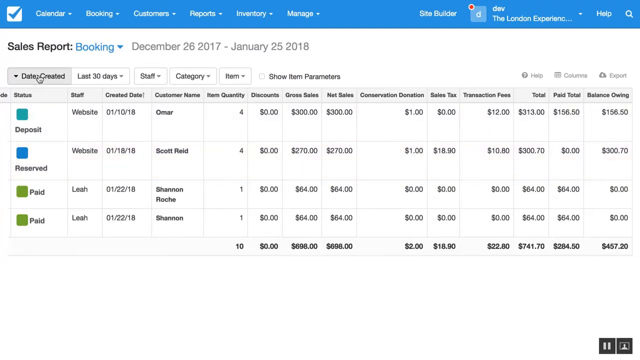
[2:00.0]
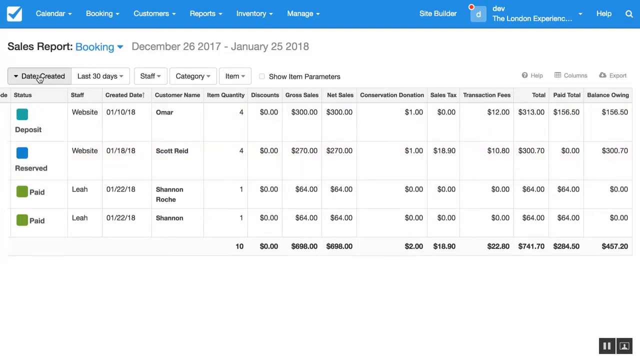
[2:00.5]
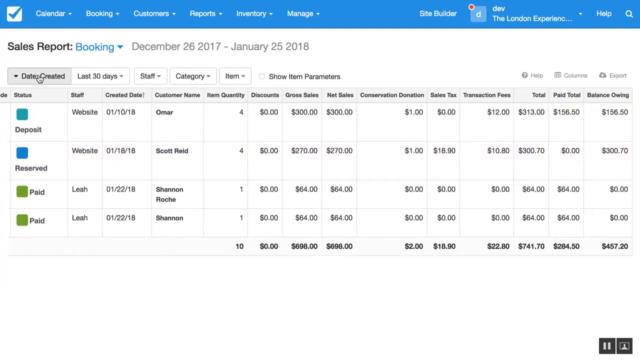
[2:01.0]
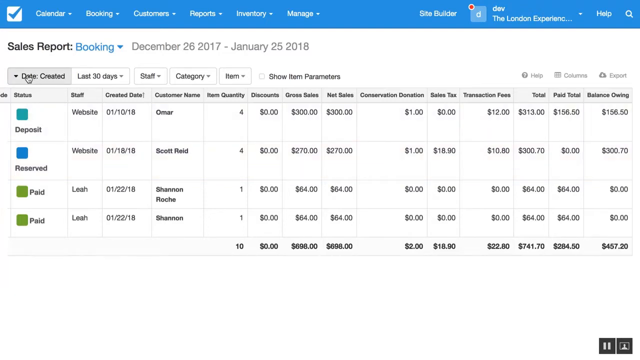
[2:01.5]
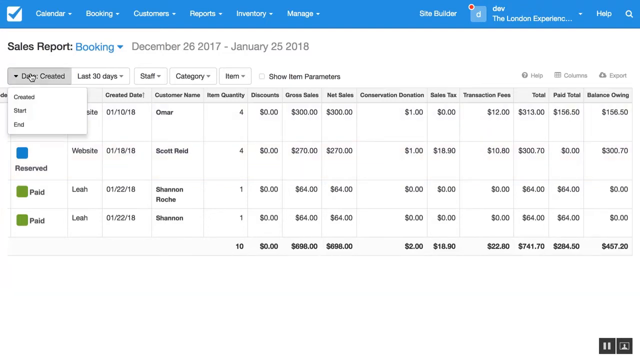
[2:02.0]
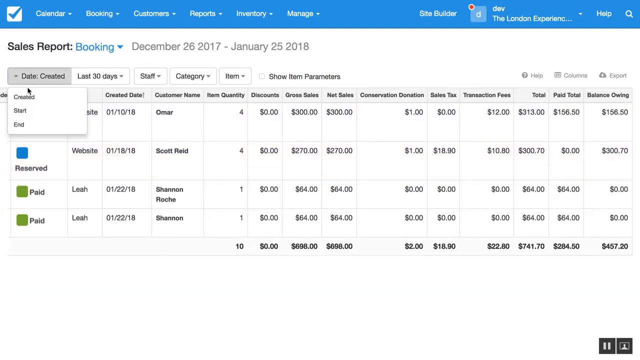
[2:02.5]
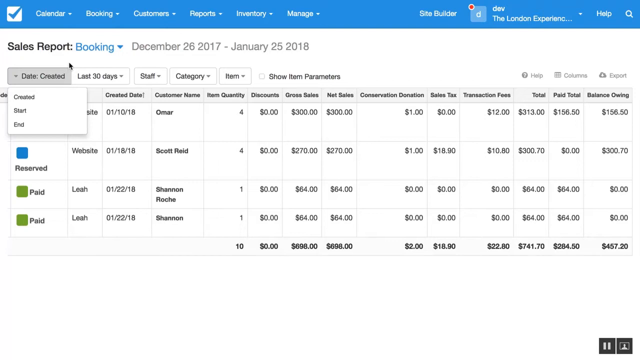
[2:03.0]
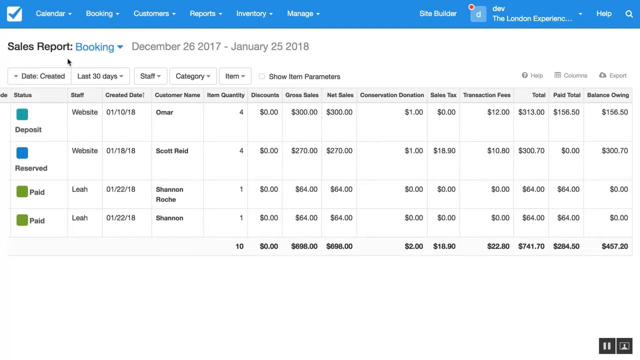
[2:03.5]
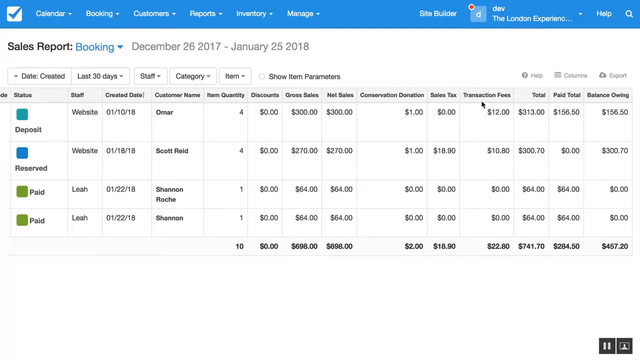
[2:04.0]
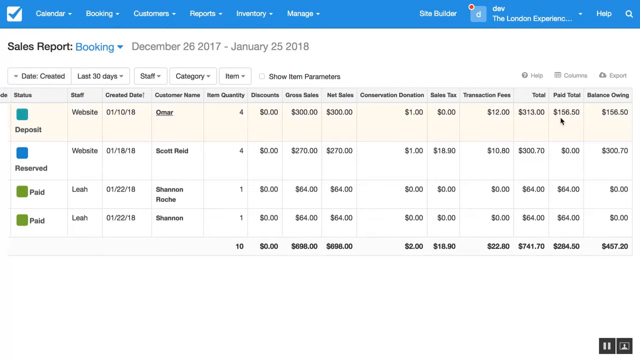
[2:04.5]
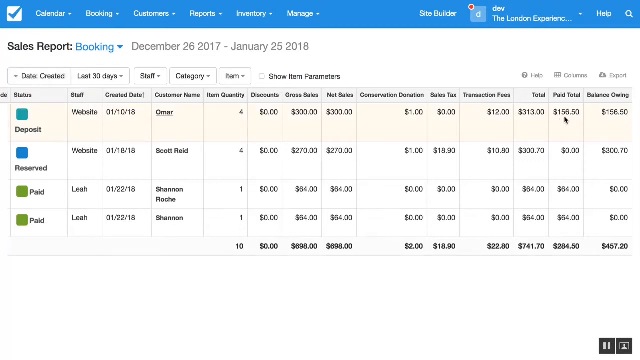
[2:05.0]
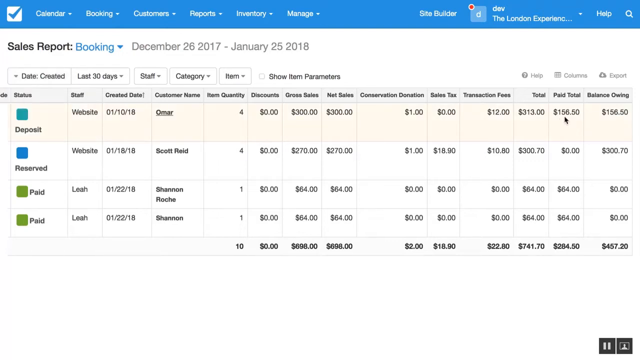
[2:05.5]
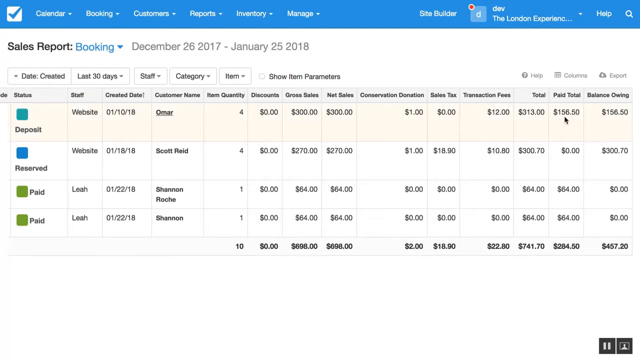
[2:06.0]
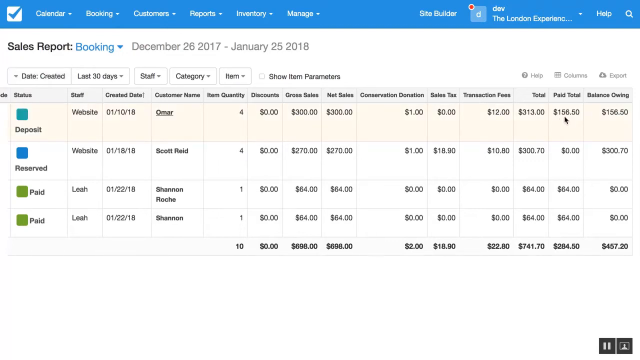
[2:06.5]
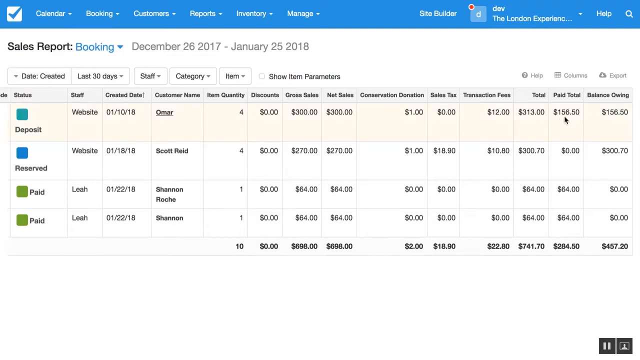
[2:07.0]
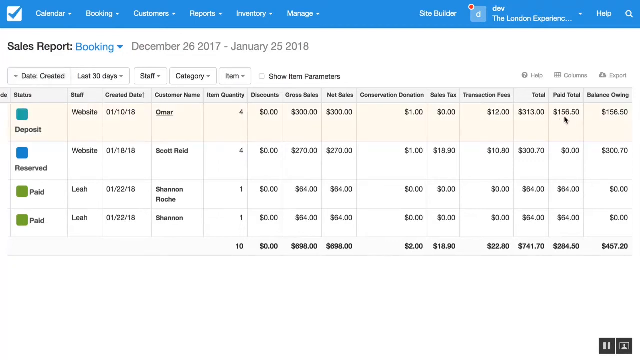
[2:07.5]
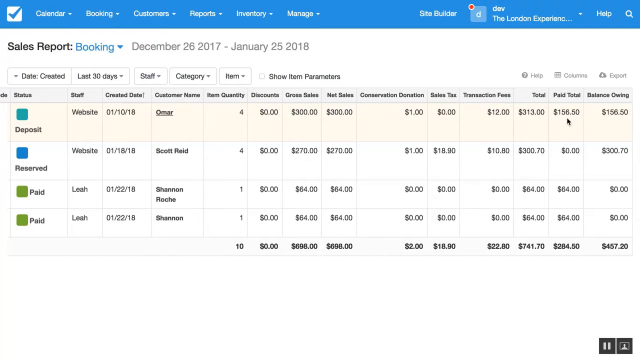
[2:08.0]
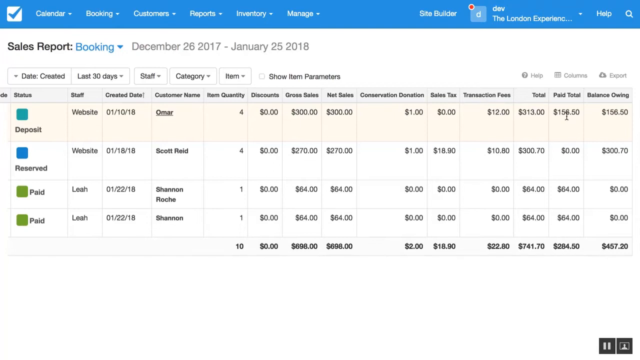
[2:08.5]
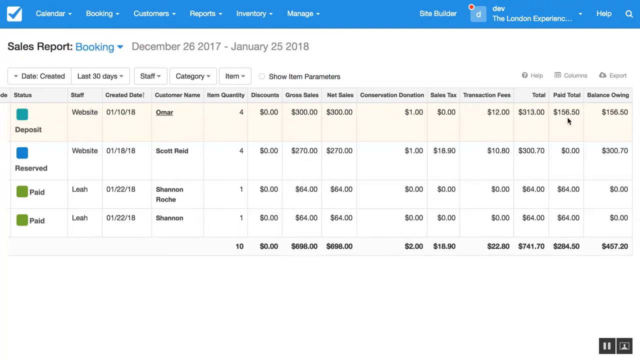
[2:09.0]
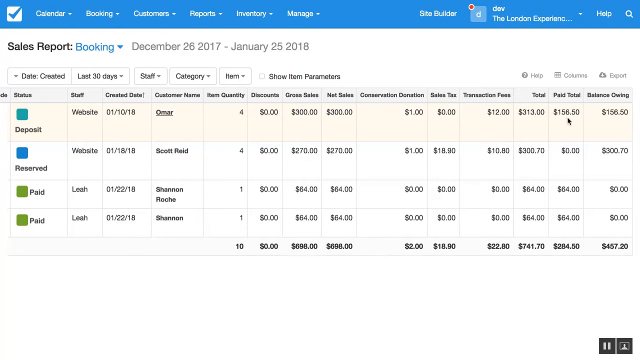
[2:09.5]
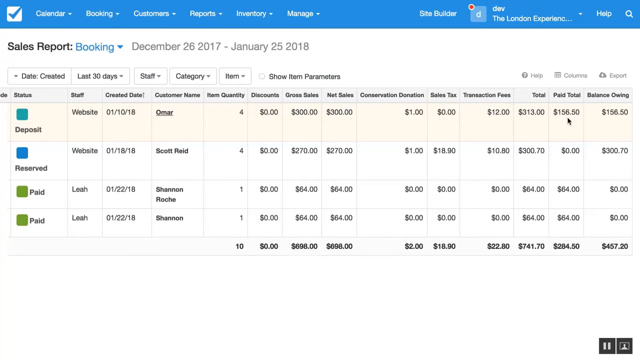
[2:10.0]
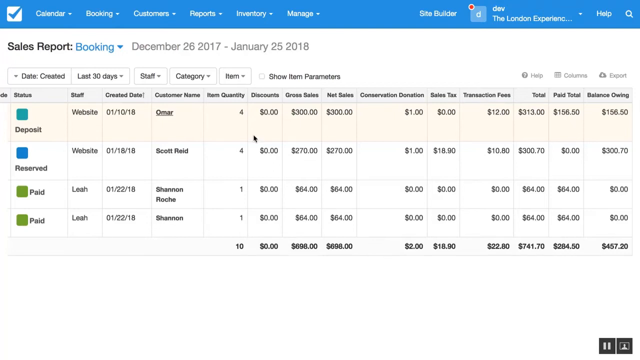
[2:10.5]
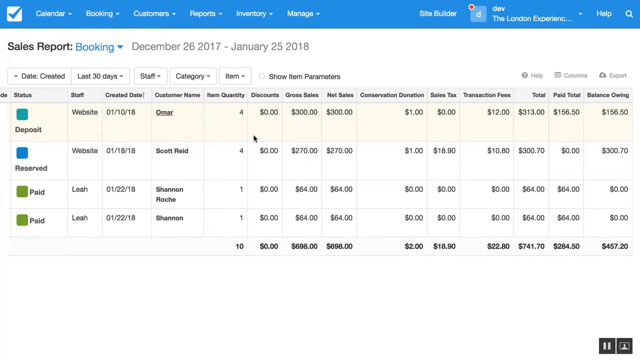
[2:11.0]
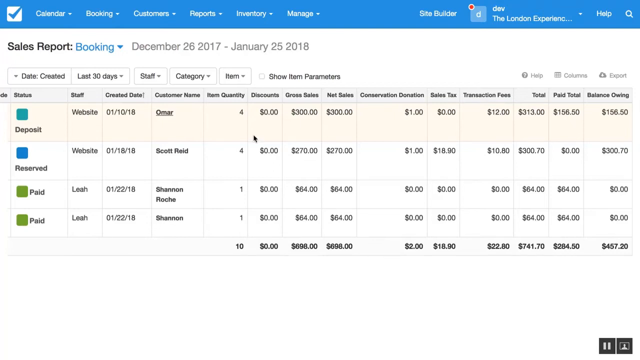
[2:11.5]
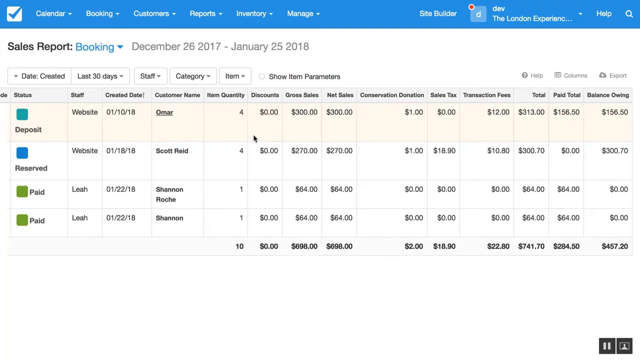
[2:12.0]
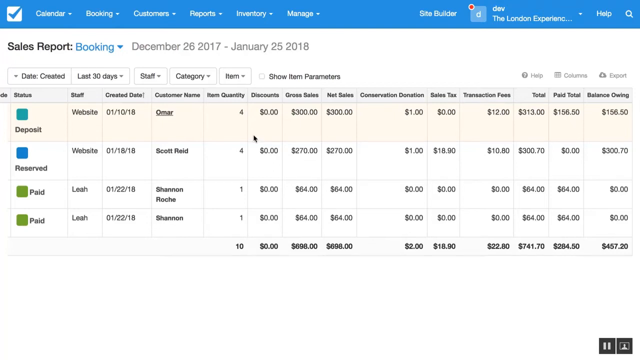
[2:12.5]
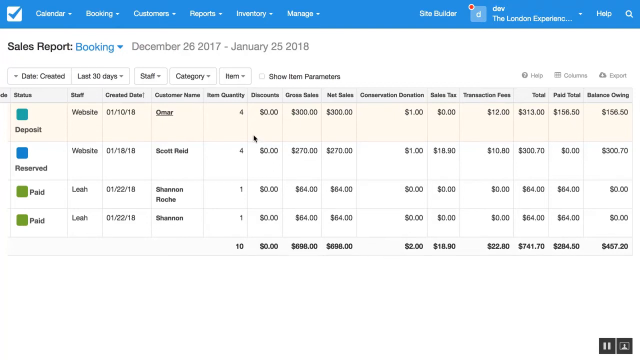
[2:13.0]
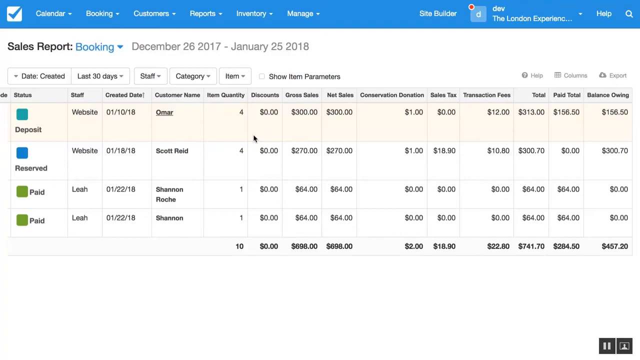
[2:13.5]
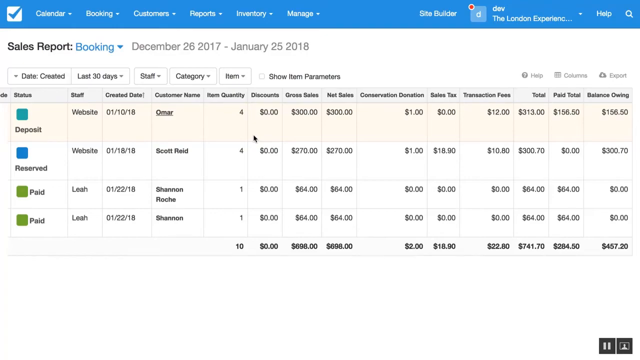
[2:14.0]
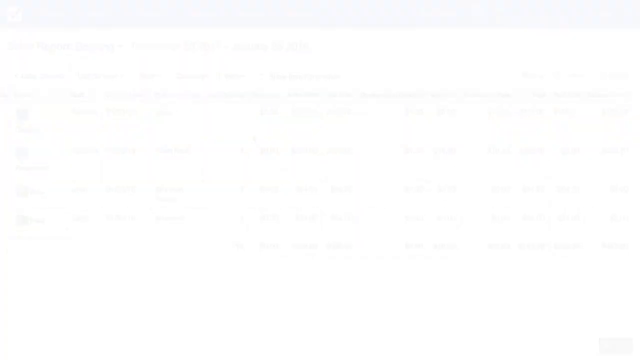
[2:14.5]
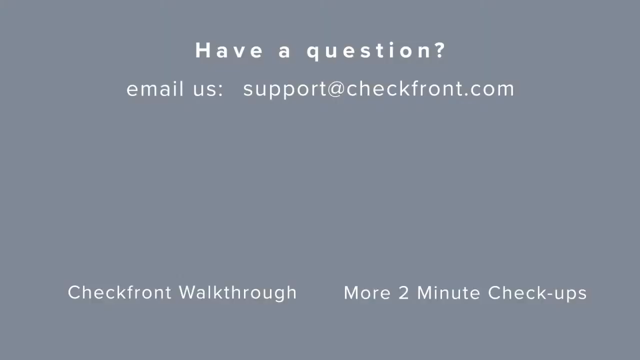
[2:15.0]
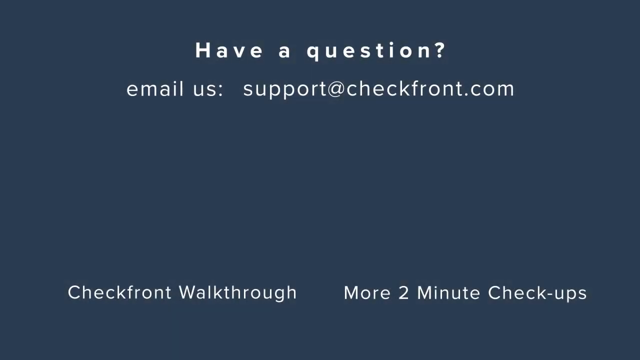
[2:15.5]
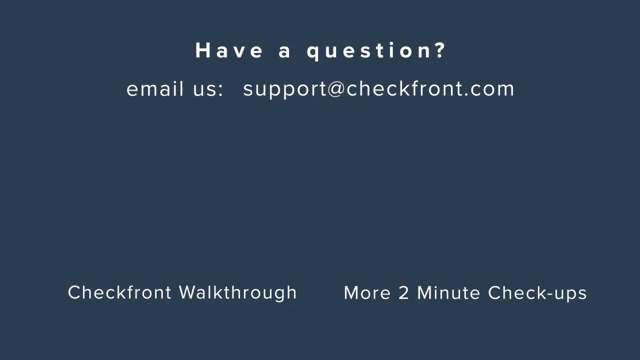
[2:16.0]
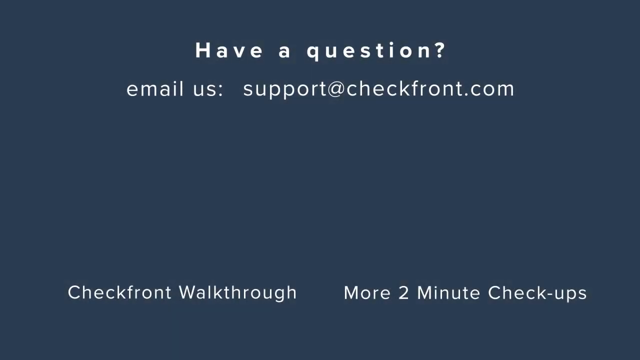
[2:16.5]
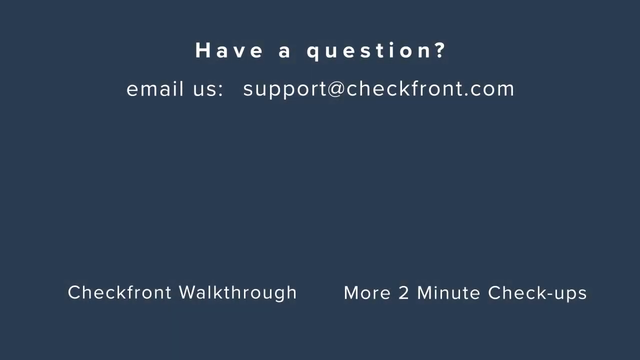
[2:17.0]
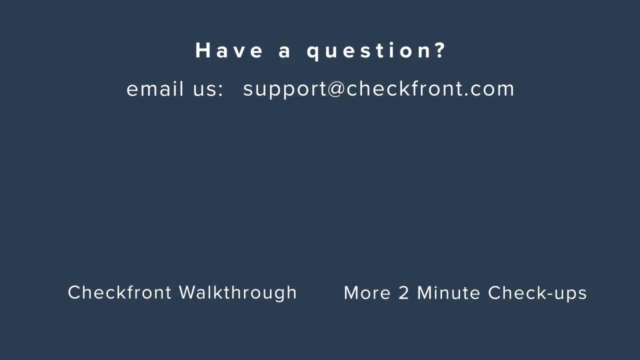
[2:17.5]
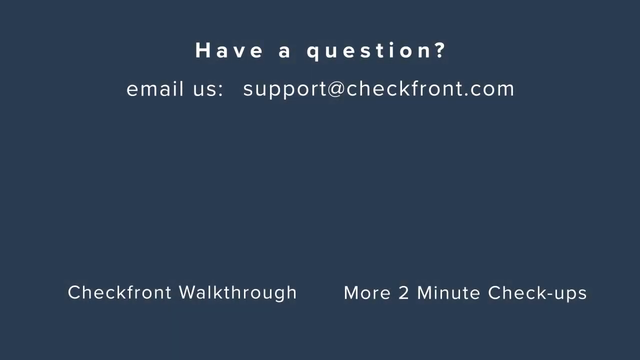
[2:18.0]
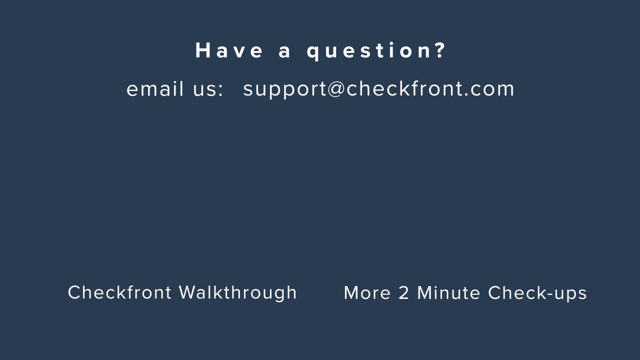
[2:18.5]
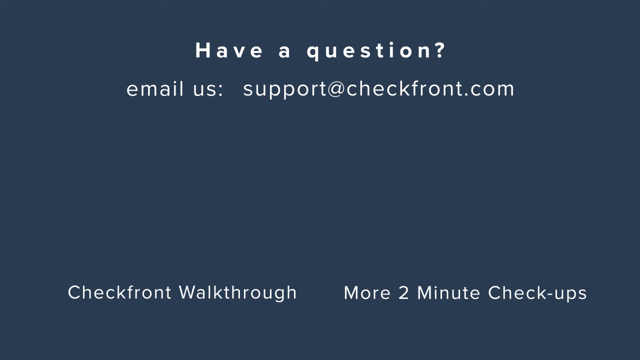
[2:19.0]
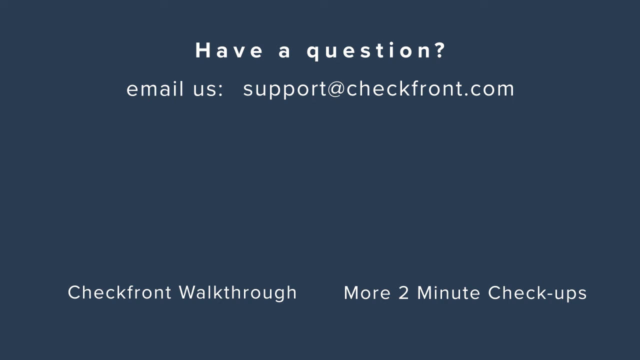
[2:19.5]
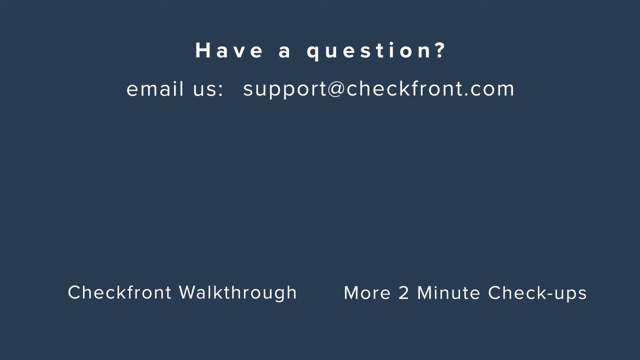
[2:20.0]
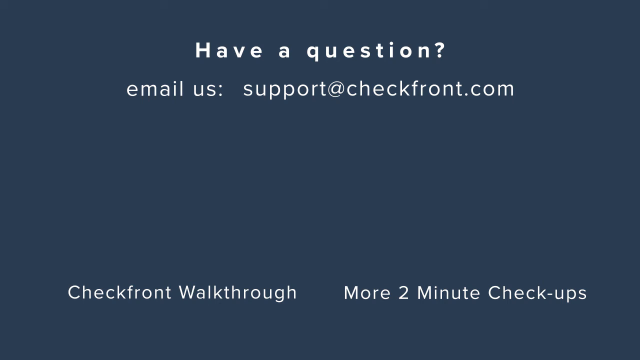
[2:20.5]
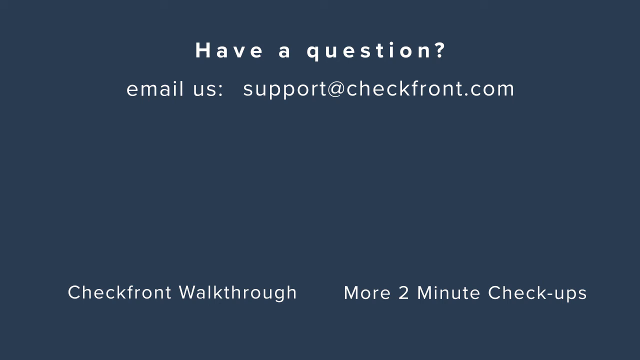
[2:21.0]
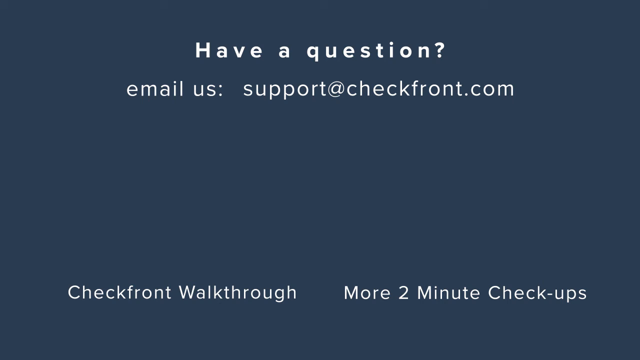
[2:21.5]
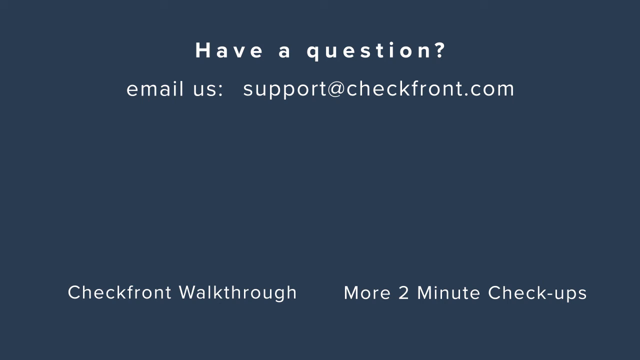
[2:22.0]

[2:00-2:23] The user clicks the "Date Created" button, and a small window opens with three options: "Created" on top, then "Start," and last "End." The pointer moves away and goes all the way across to the right side of the page into a boxed cell for a paid total reading $156.50. The pointer circles around this amount, then moves to the middle while staying within this top column. The screen goes blank white, then turns a purple or bluish color. At the top a caption says "have a question," and below it "email us support at check front .com." On the bottom left are the words "check front walkthrough," and to their right the words "more two-minute checkups."